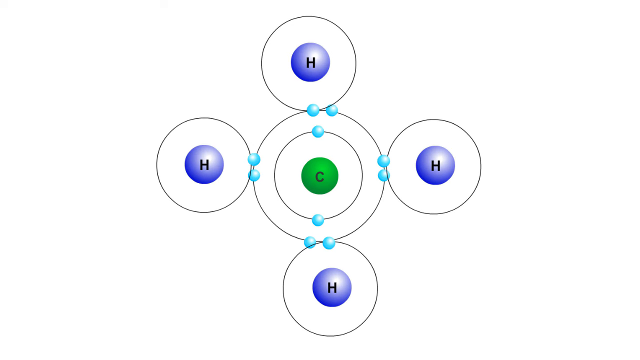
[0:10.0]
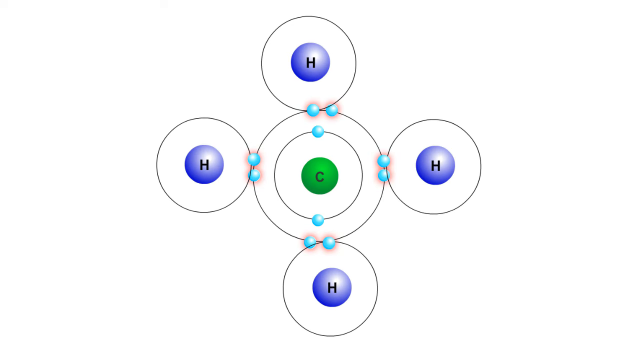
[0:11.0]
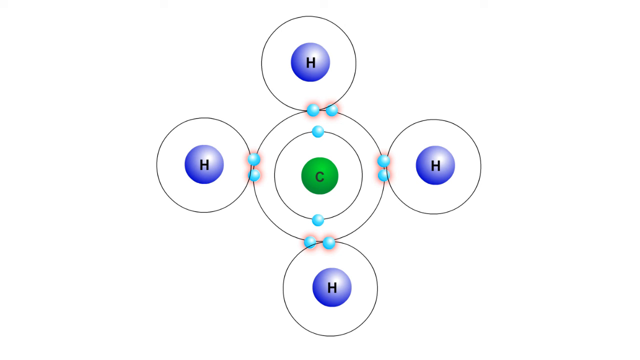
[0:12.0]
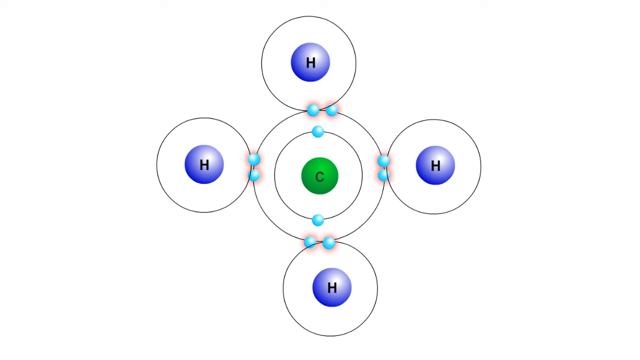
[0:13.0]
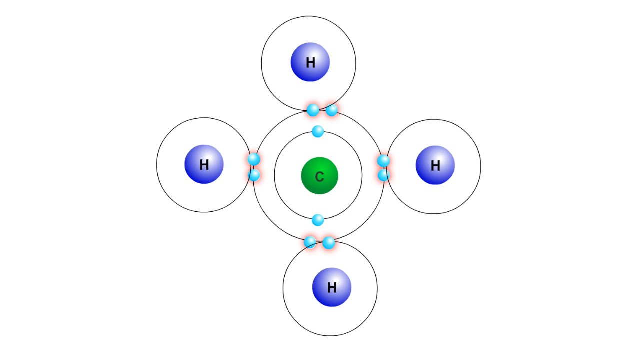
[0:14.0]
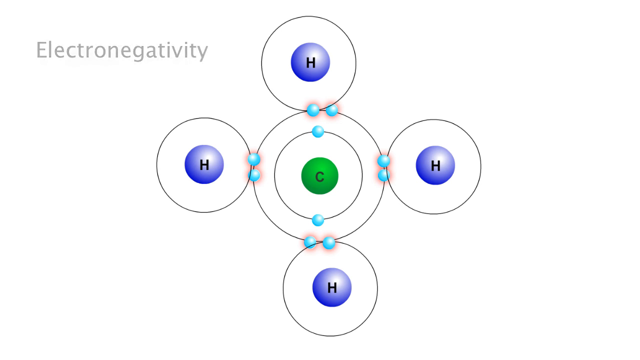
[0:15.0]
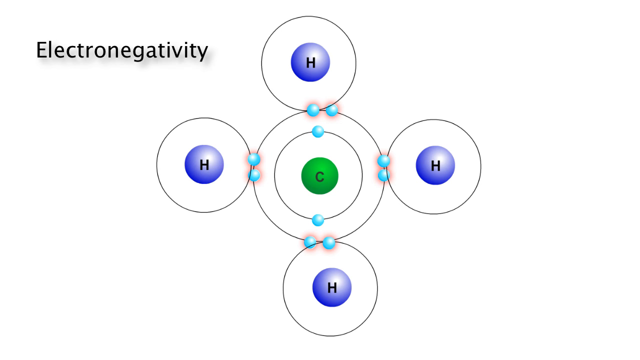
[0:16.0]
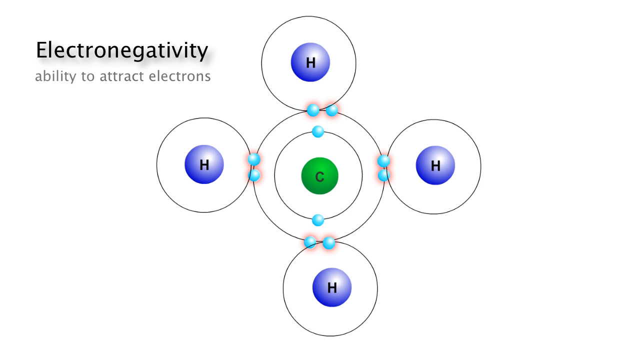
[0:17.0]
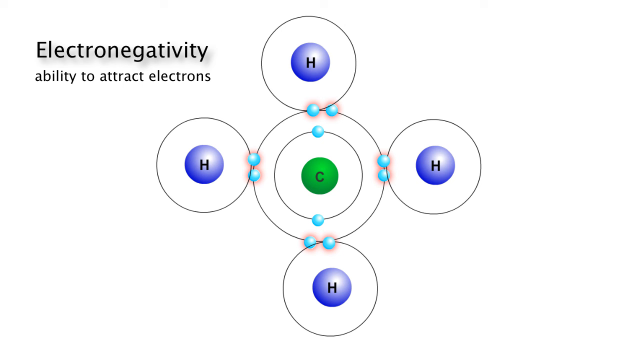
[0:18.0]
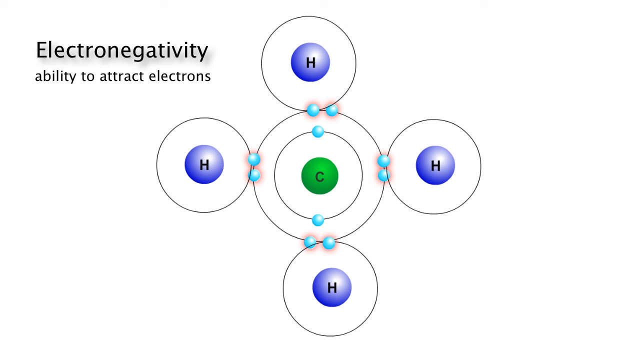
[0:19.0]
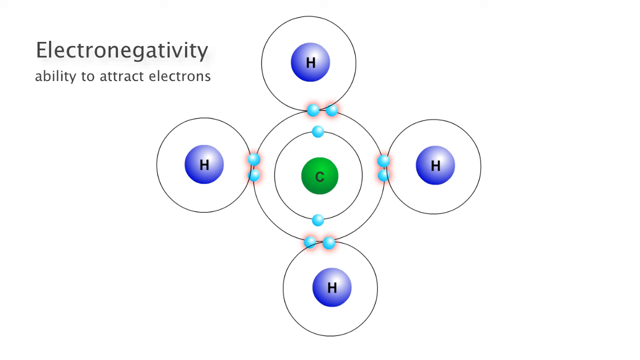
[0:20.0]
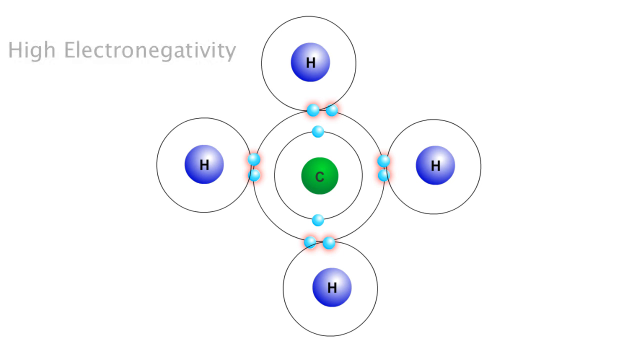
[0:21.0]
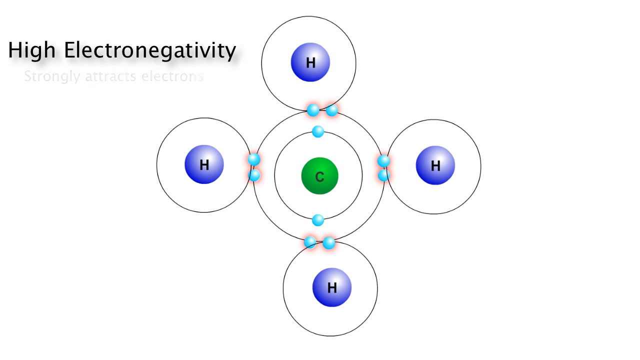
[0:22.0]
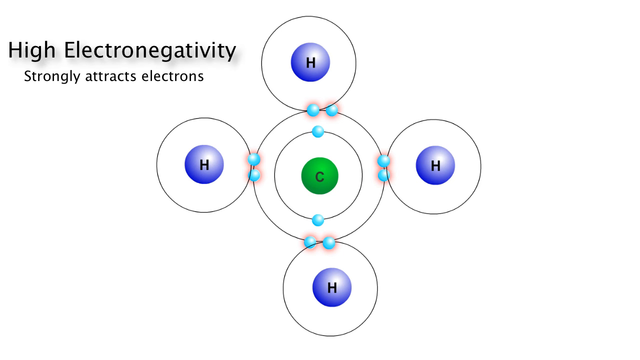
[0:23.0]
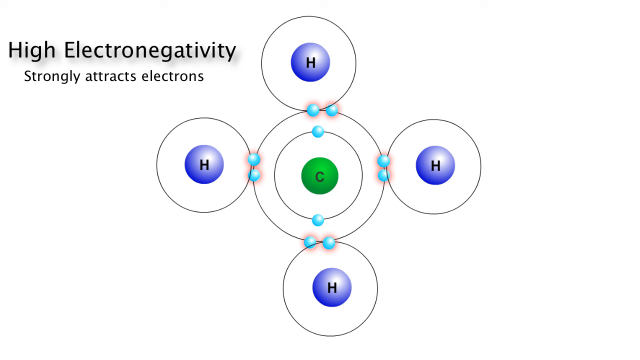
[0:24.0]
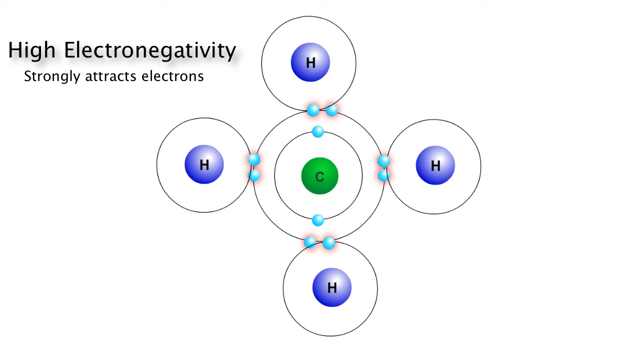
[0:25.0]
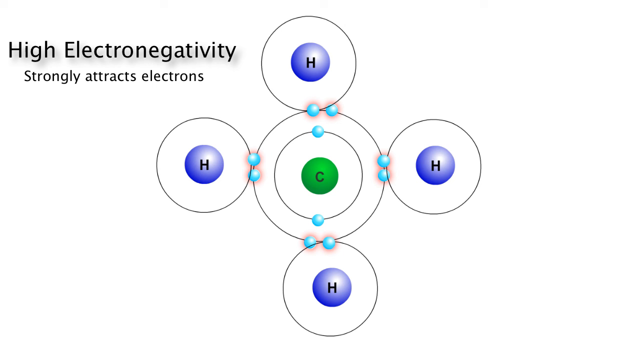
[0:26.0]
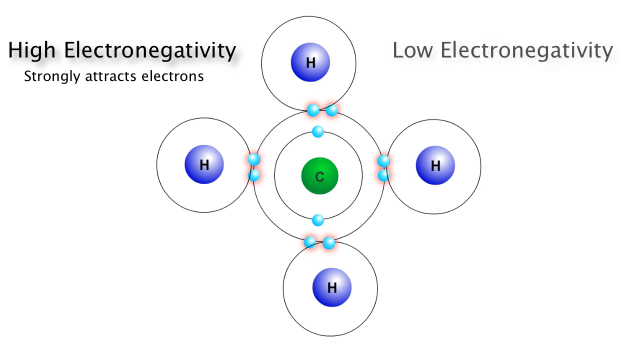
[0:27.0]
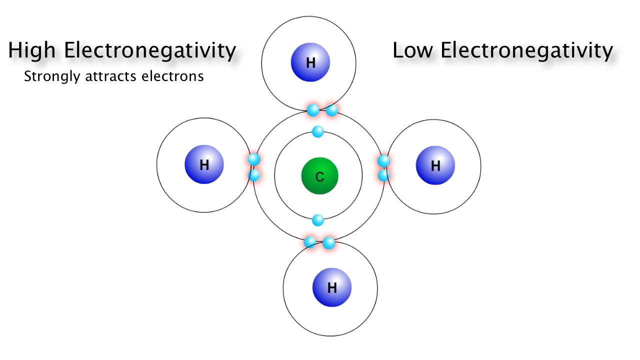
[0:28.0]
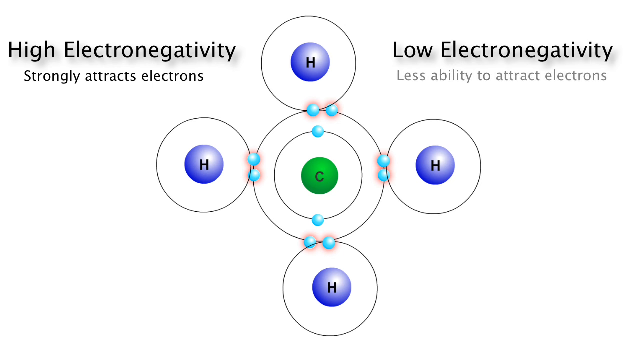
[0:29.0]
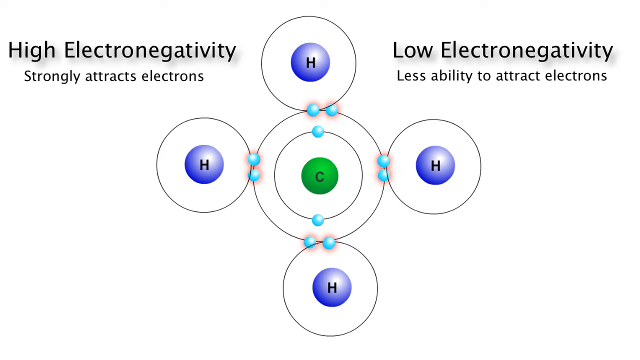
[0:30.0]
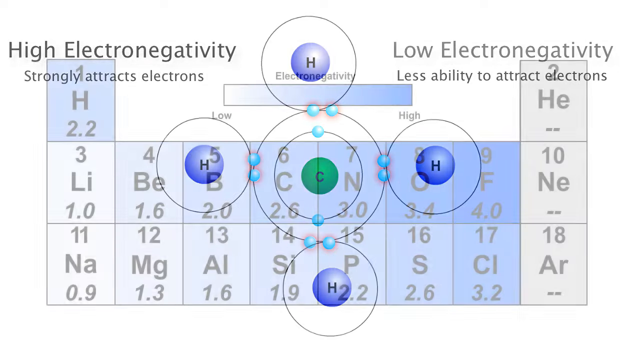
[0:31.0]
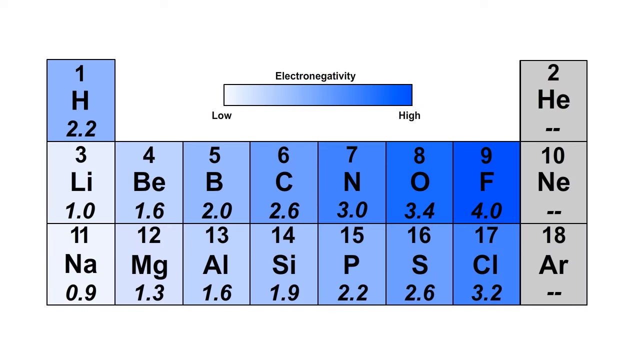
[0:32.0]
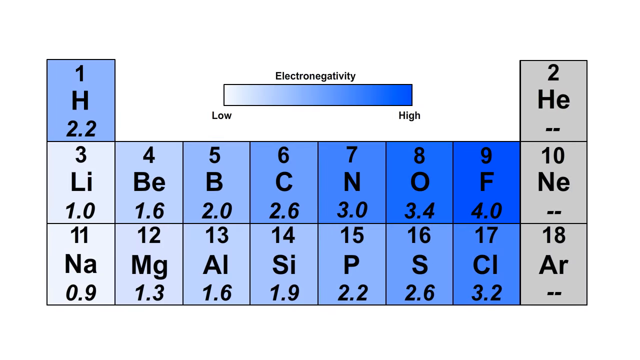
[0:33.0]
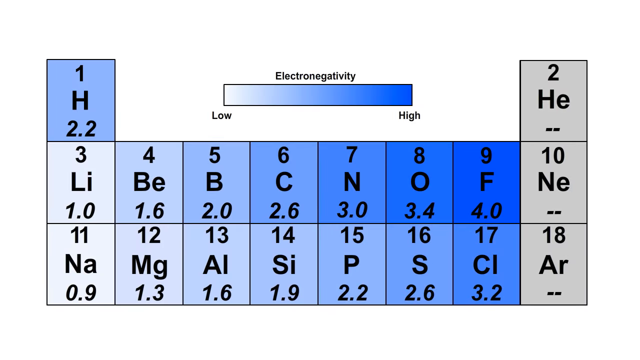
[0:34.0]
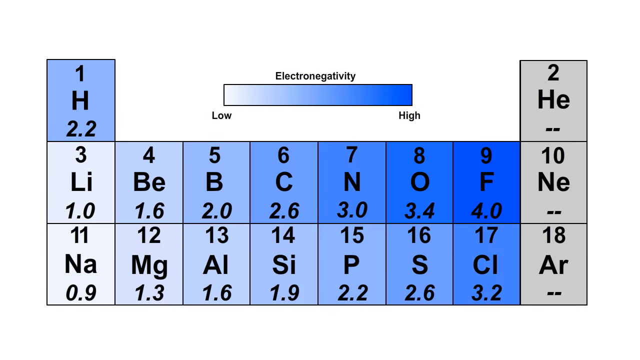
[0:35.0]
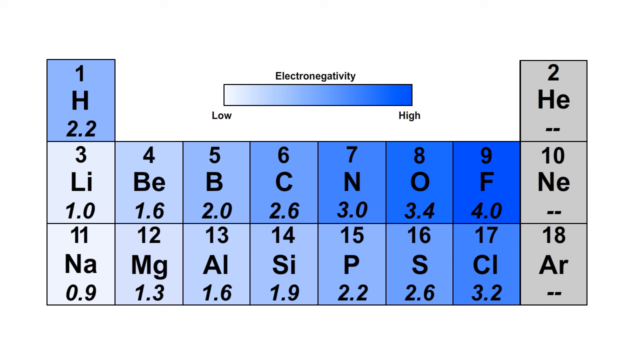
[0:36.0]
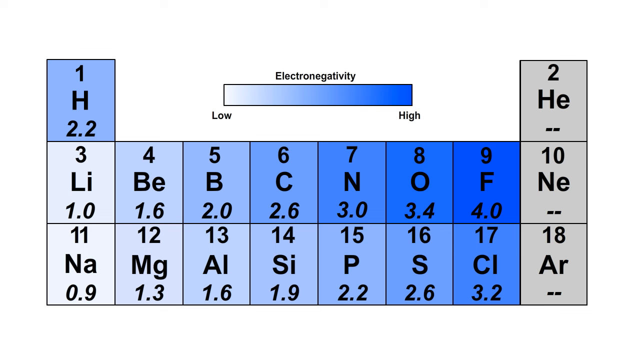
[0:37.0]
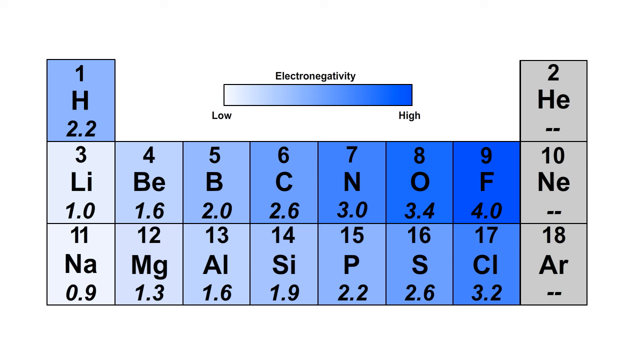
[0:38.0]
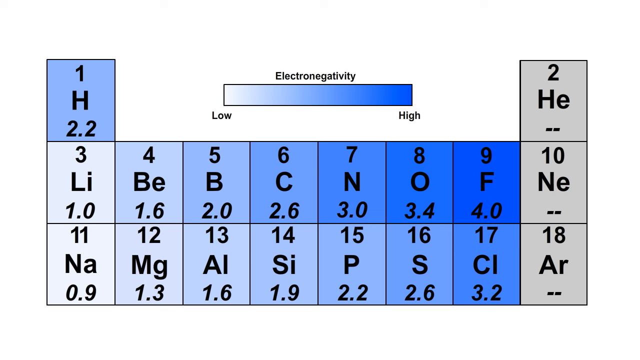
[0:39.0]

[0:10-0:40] In the center is a small green ball with a black C on it, presumably for carbon. It is surrounded by concentric black circles: a closer one with two blue spheres on it and a larger one with eight blue spheres, presumably indicating electrons or electron shells. Around it are four purple balls marked H, each with a single black ring, connected equidistantly in a cross shape. The outer blue spheres pulse with red around them to highlight them. In the upper left the word "electronegativity" appears again, with smaller text beneath it reading "ability to attract electrons". This is replaced in the same spot by "high electronegativity", with "strongly attracts electrons" beneath it. In the upper right appears "low electronegativity", with text beneath ending "ability to attract electrons"; these have a drop shadow. That fades out and is replaced by a section of the periodic table with elements in shades of gray to blue, arranged in a kind of U shape. In the gap in the middle is a horizontal color gradient going from light gray to a kind of dark blue, labeled "electronegativity" across the top, with the gray left side labeled "low" and the blue right side labeled "high". The element boxes are colored to match their electronegativity: hydrogen, labeled "1H2.2", is a kind of mid-blue, and the other elements vary, with the darkest being 9F at 4.0. The numbers are probably the amount of electronegativity, since the gray boxes have low numbers and the blue ones high numbers. There are many entries.